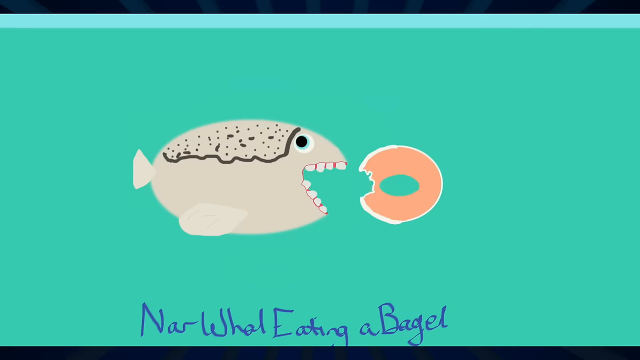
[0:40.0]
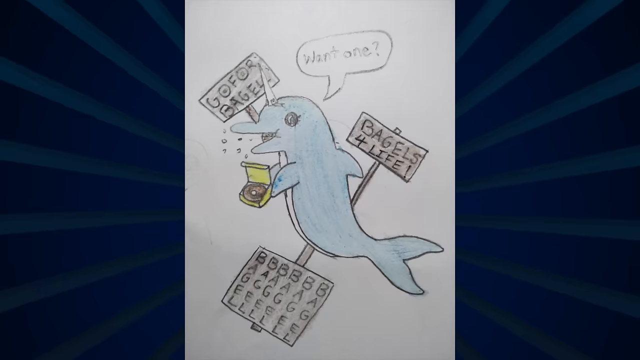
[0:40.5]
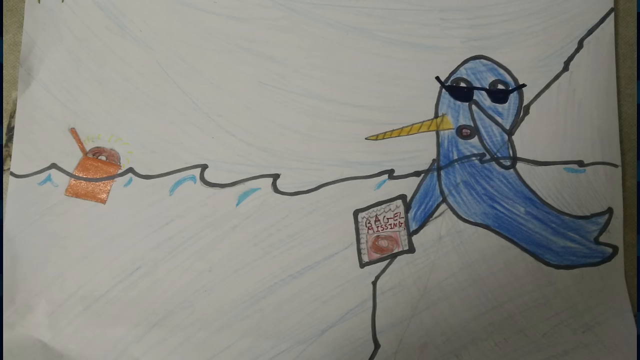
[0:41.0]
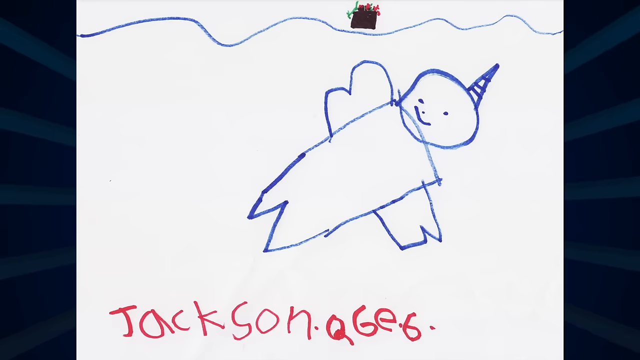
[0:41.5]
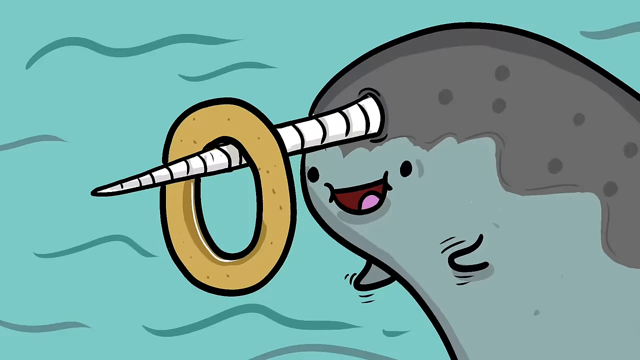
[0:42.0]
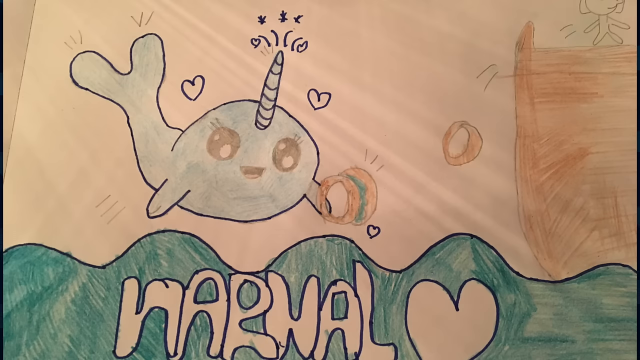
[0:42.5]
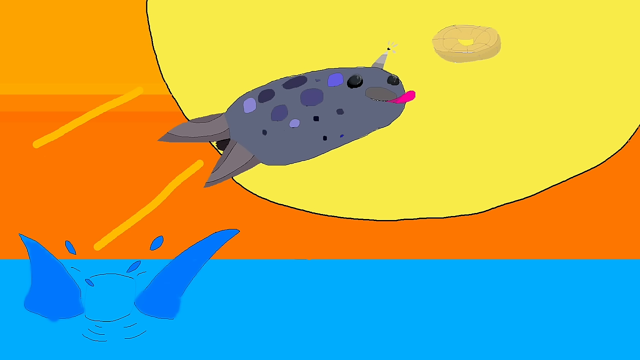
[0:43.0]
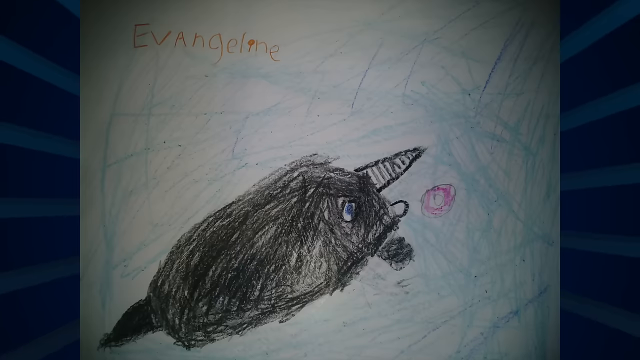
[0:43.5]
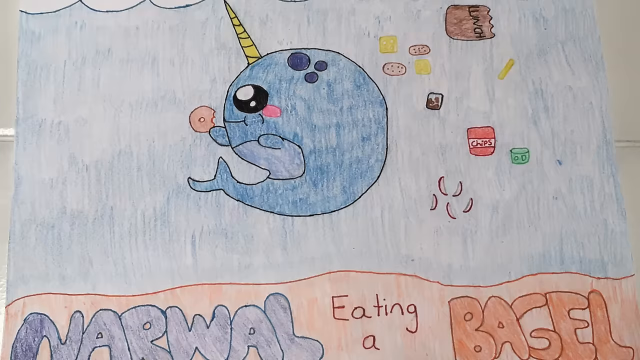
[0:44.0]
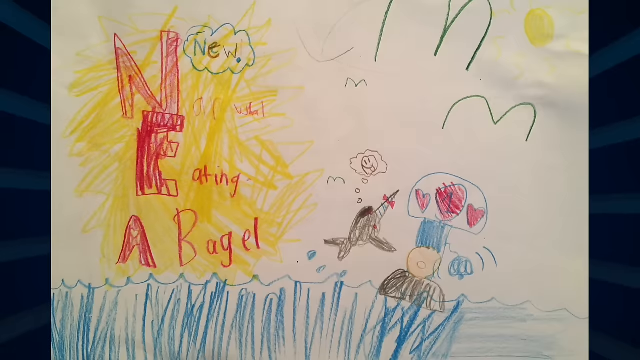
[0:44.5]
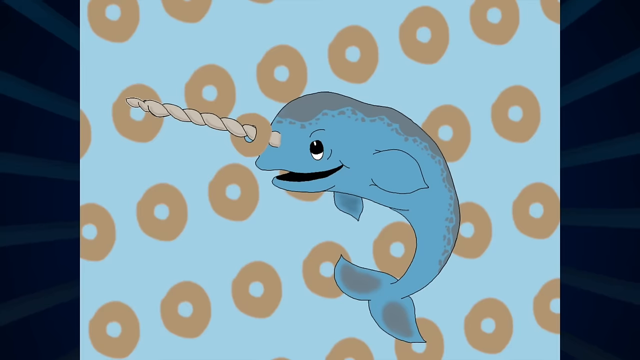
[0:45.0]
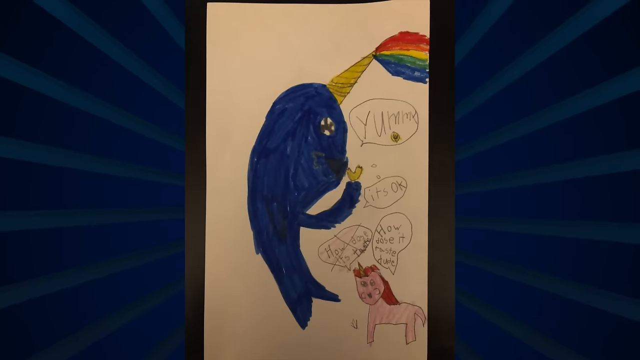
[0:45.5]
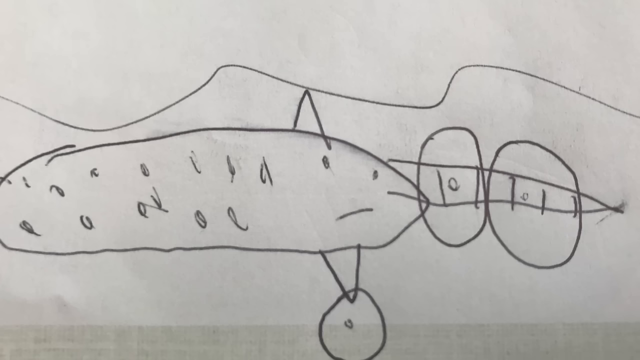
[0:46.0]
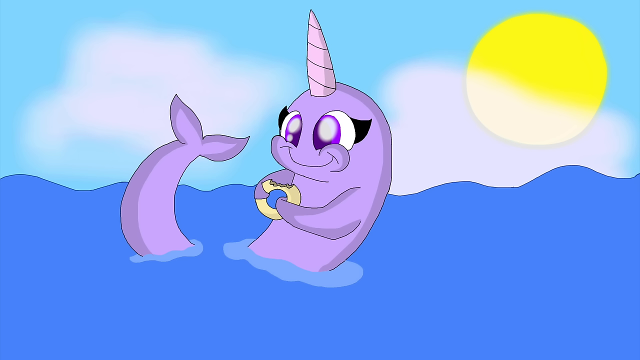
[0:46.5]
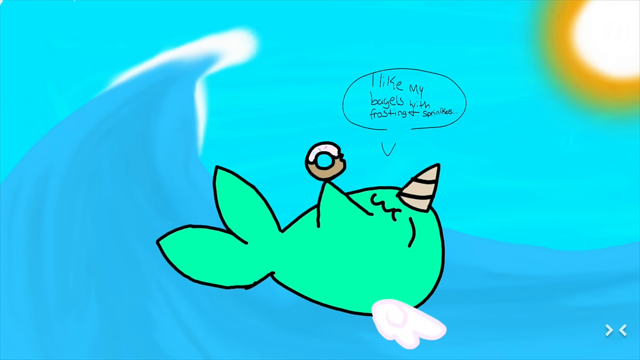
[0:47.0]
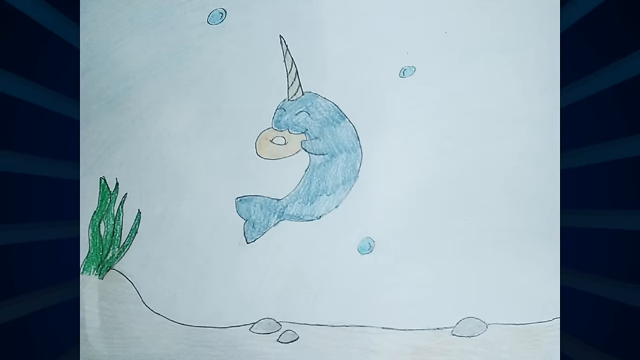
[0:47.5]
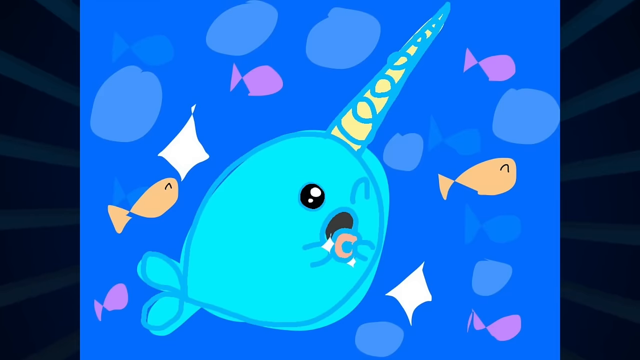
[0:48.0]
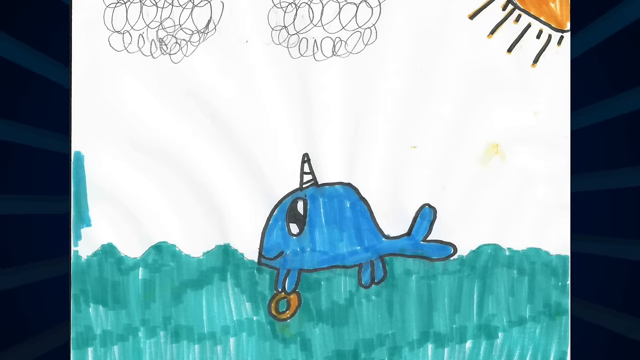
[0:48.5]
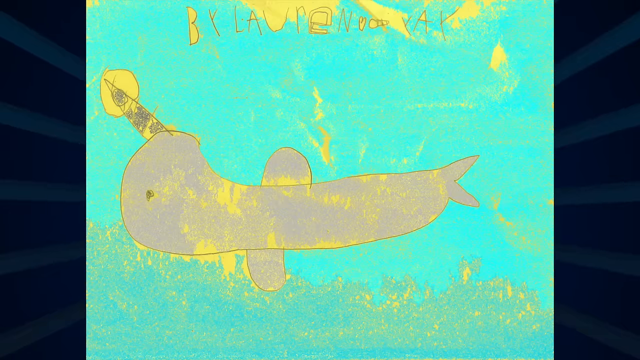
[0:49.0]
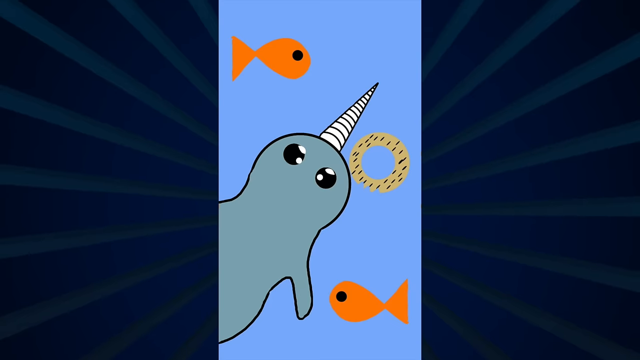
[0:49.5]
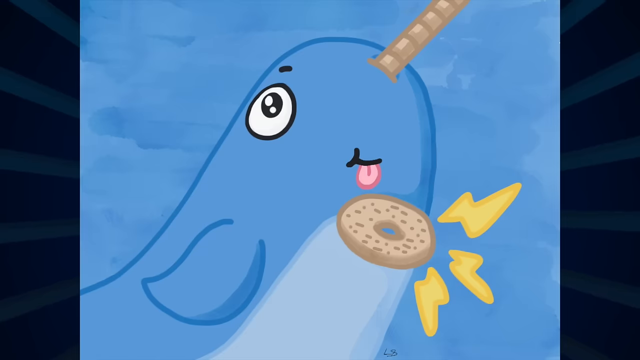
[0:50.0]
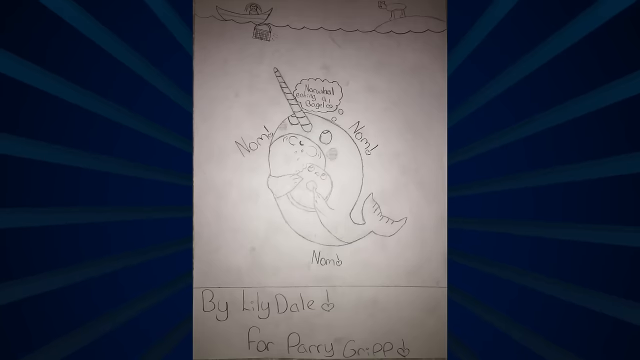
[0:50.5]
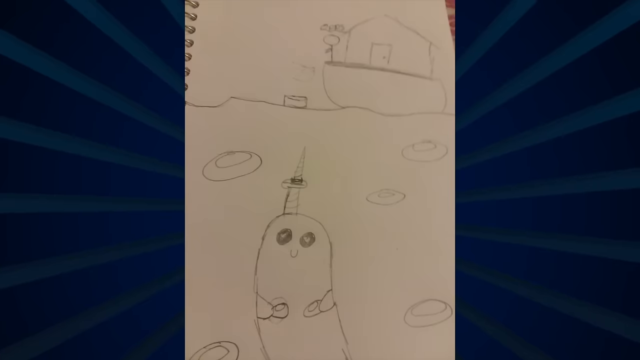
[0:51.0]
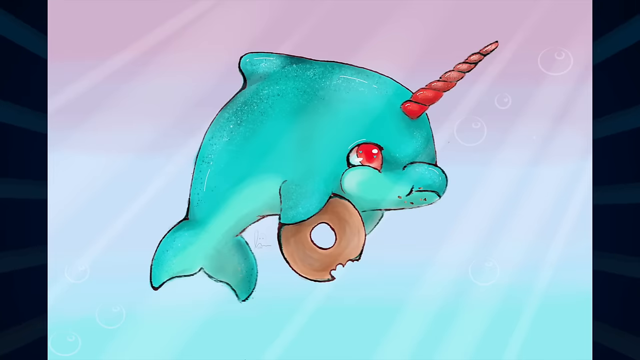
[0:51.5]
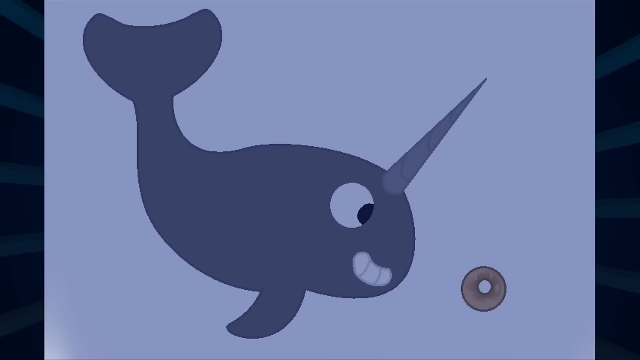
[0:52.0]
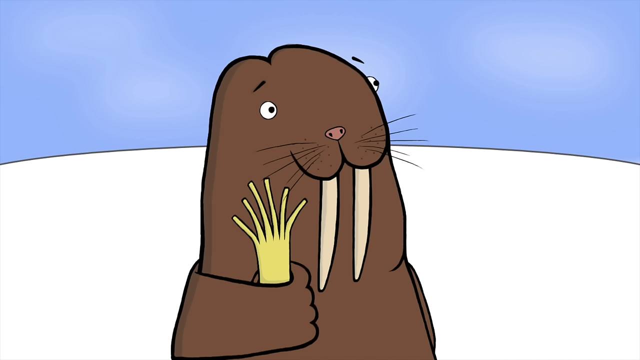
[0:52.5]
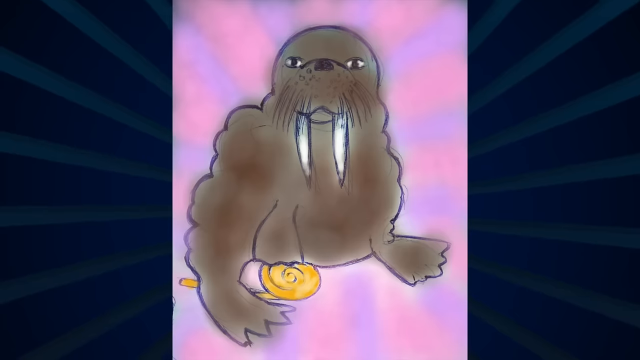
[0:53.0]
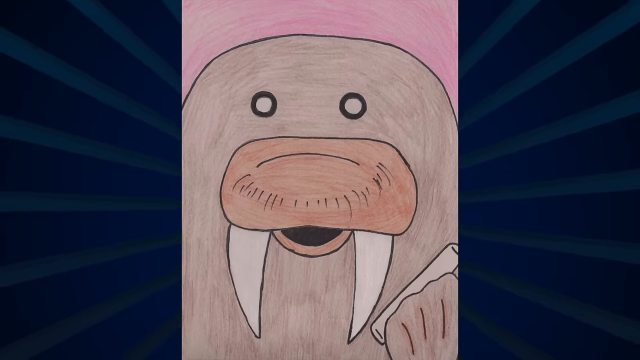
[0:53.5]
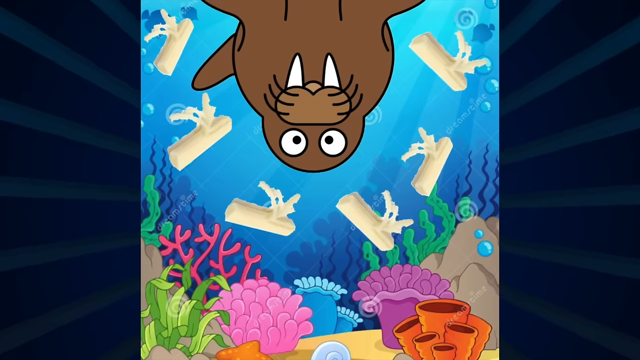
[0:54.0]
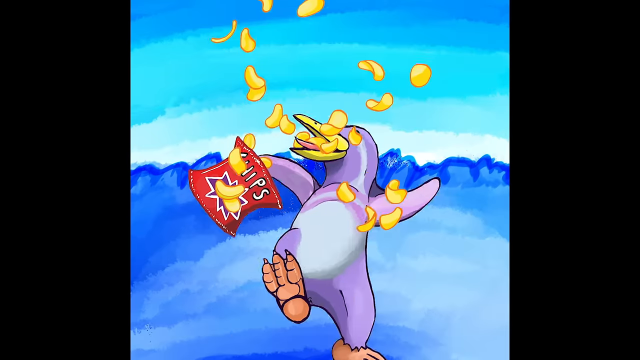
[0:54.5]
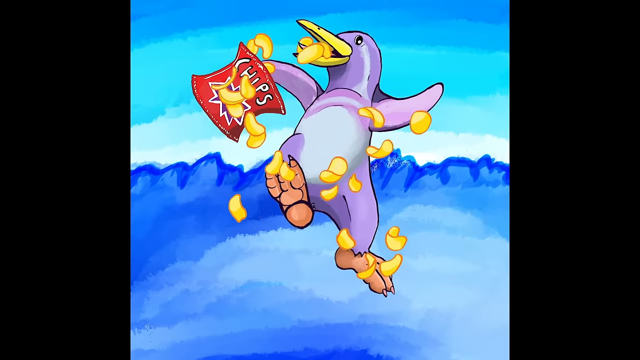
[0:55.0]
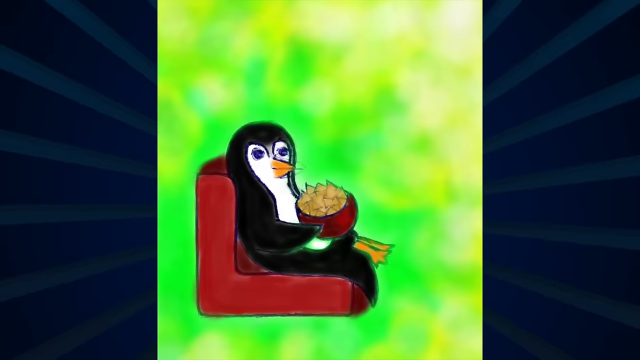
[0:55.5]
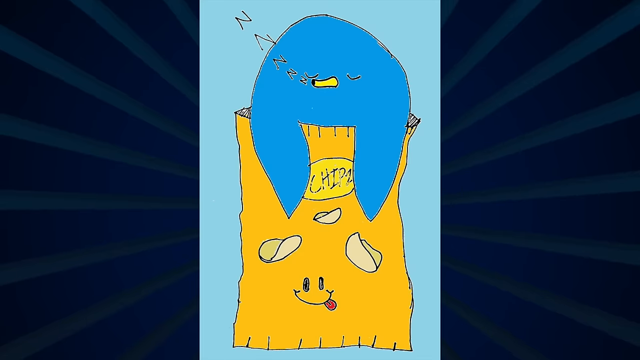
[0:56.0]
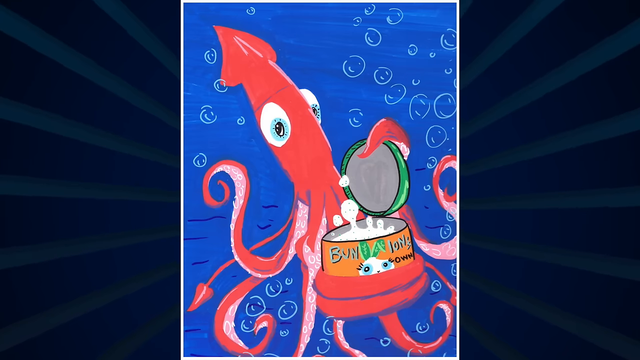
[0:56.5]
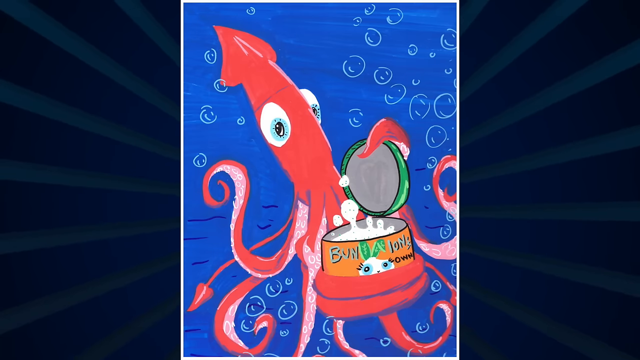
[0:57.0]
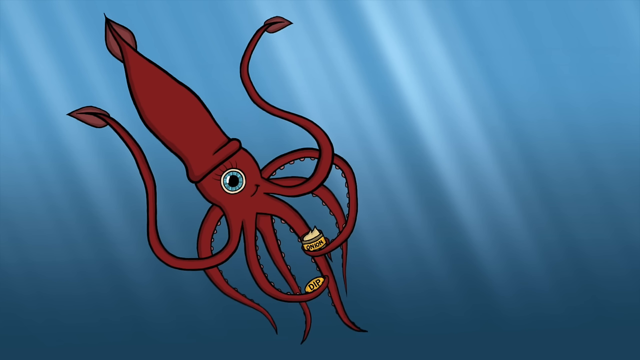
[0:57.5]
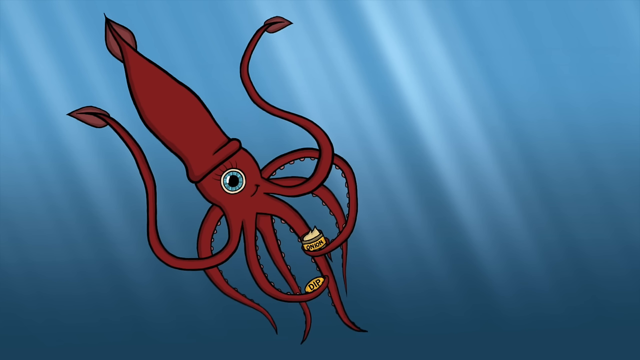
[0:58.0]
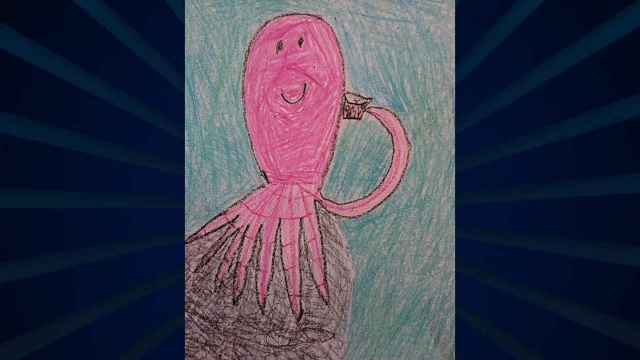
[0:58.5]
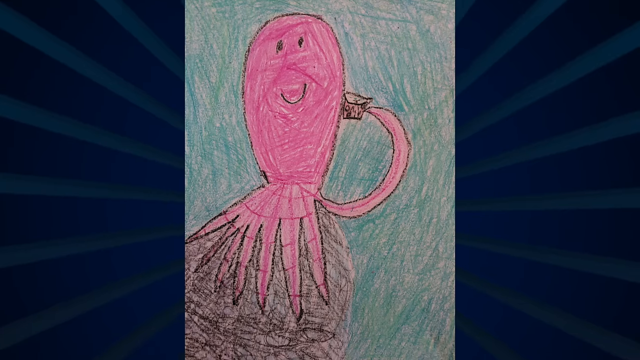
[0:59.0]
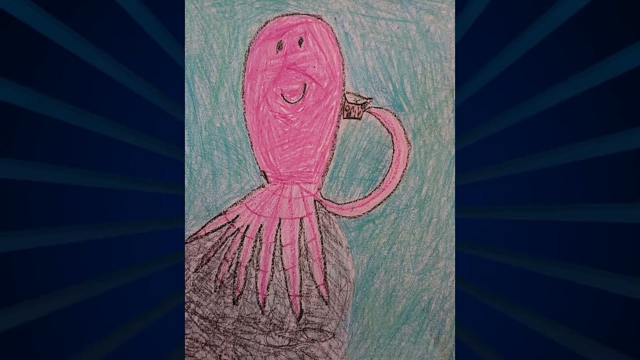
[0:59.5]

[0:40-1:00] A gray narwhal with big teeth gets ready to take another bite of the bagel. Multiple pictures show the narwhal and the bagel. One shows the narwhal wearing sunglasses with a bagel floating in the water next to it. Another shows the narwhal happily staring at the bagel on its horn. Another narwhal is drawn in anime style, with a fisherman throwing multiple bagels at it. Another drawing shows the narwhal leaping out of the water to grab the bagel. The next shows the narwhal with multiple foods near it, choosing the bagel. One picture shows the narwhal with bagels all around it. The drawings use different mediums and styles, from crayons, pencils and markers to digital art. In each one the narwhal is happy to have its bagel, and sometimes it appears in different colors. Next, a walrus eats food. A penguin that has been given chips jumps up and down with happiness. Then a penguin sits in a chair eating. Another drawing shows a penguin sleeping in a bag of chips. There is also a squid eating out of a jar.